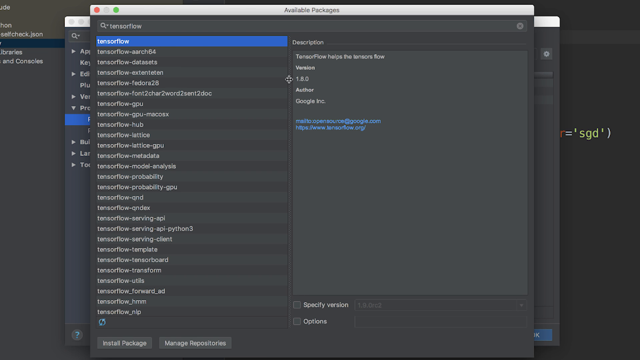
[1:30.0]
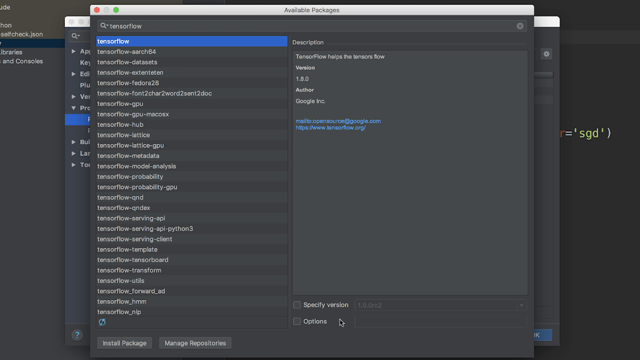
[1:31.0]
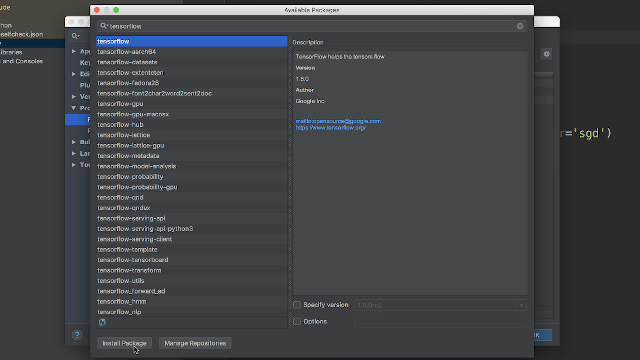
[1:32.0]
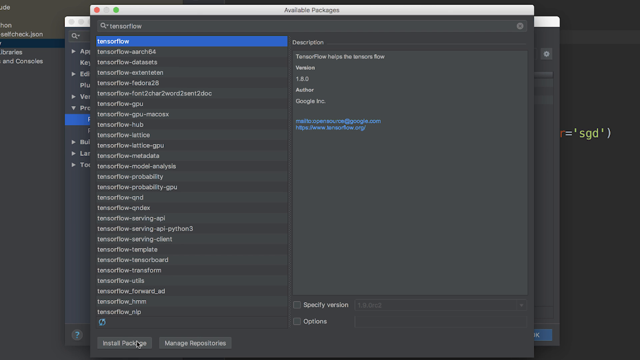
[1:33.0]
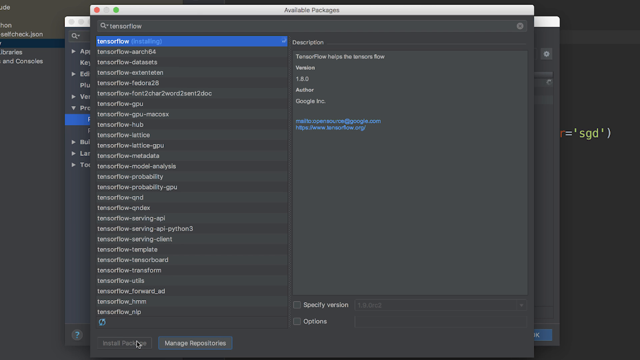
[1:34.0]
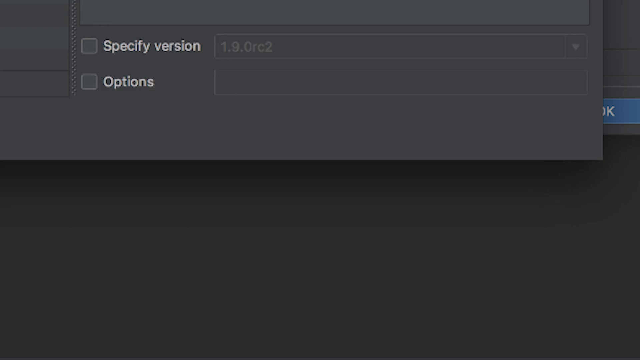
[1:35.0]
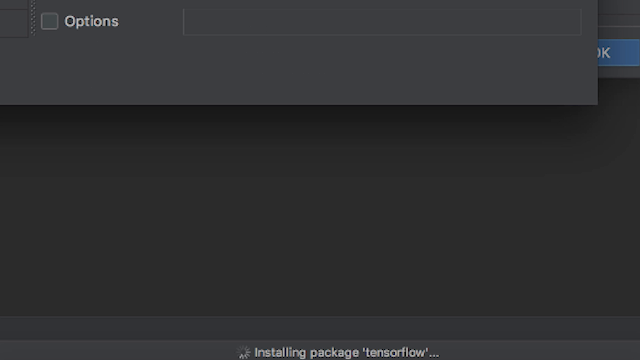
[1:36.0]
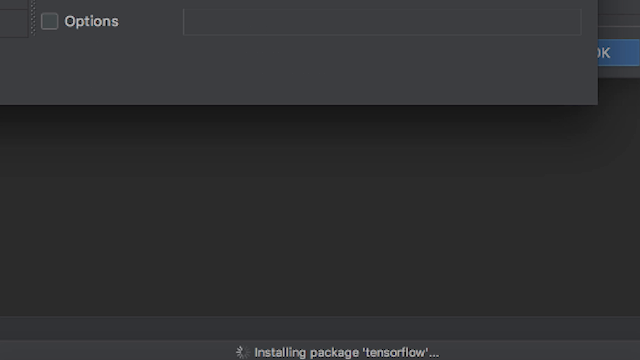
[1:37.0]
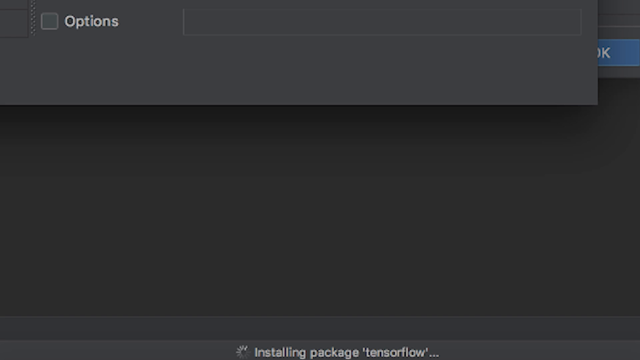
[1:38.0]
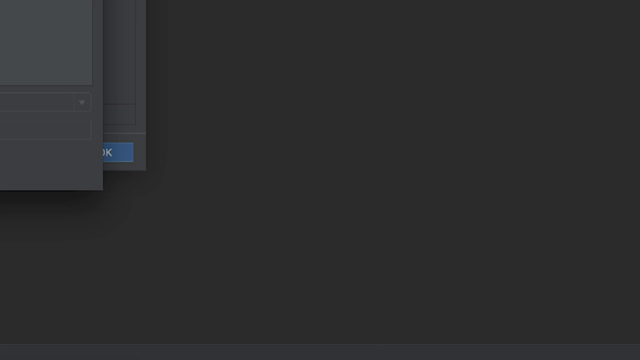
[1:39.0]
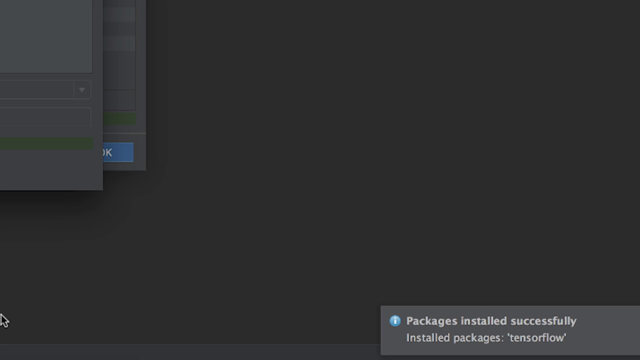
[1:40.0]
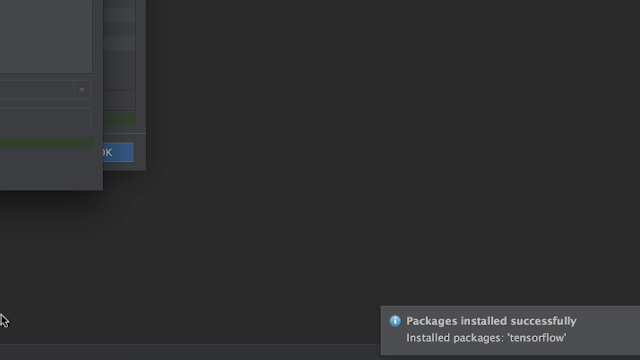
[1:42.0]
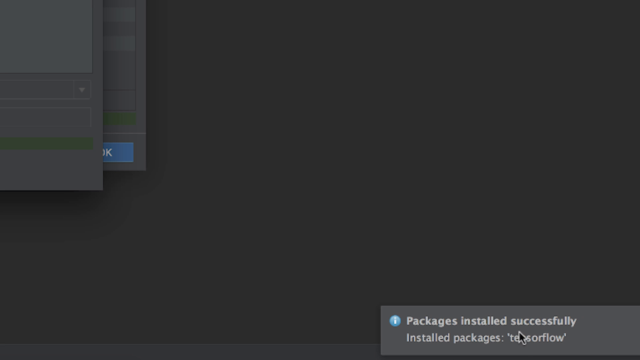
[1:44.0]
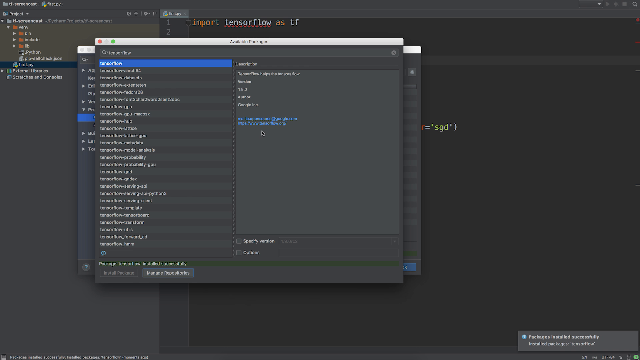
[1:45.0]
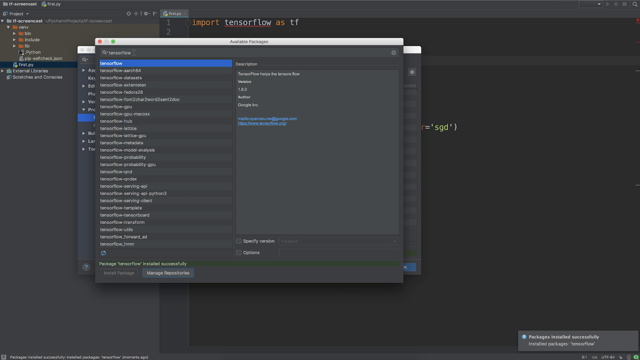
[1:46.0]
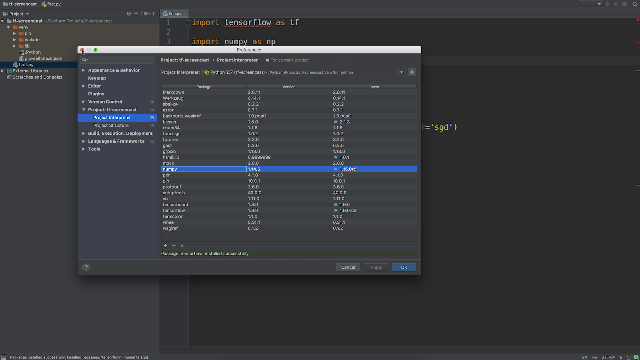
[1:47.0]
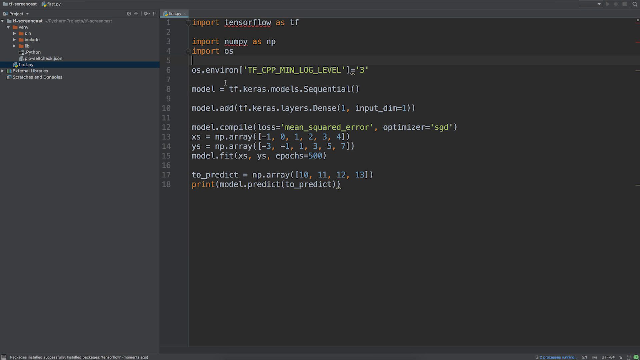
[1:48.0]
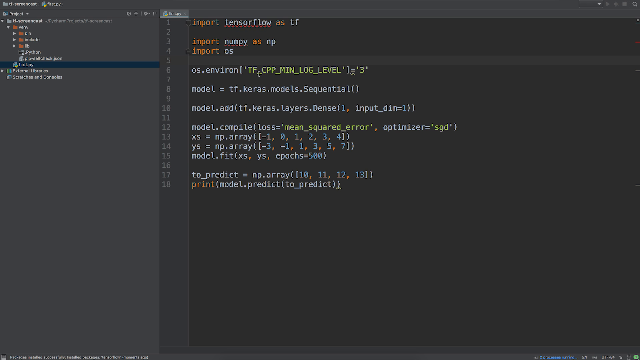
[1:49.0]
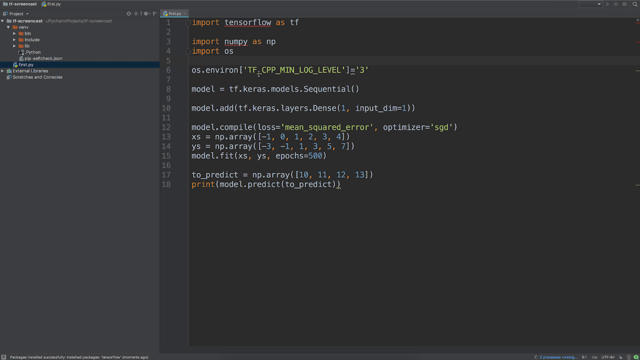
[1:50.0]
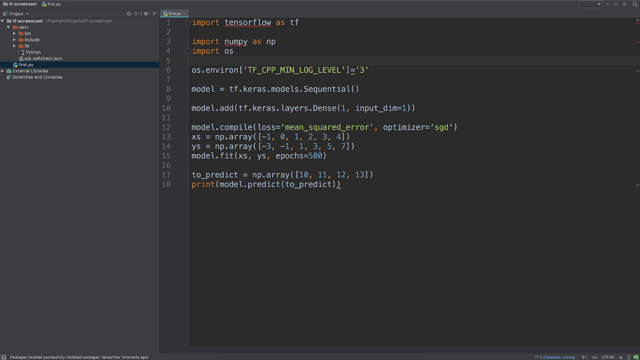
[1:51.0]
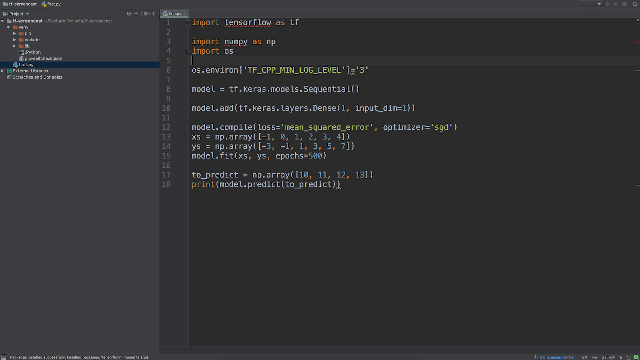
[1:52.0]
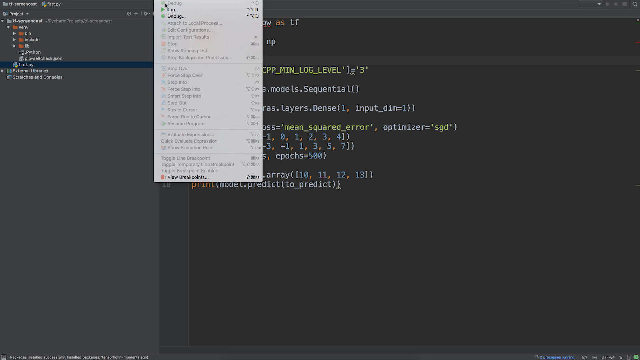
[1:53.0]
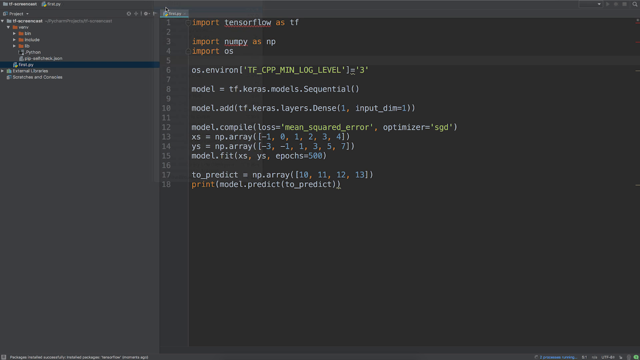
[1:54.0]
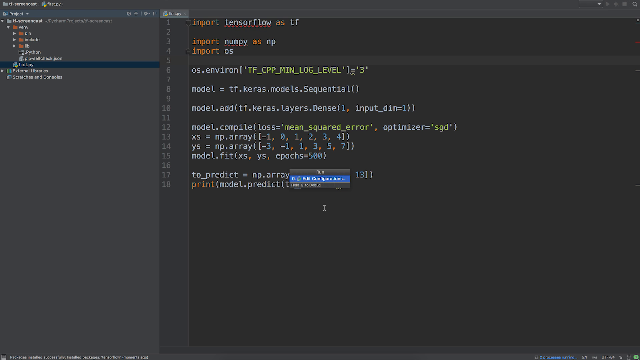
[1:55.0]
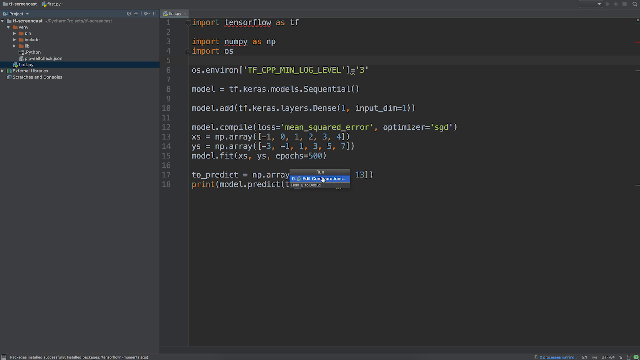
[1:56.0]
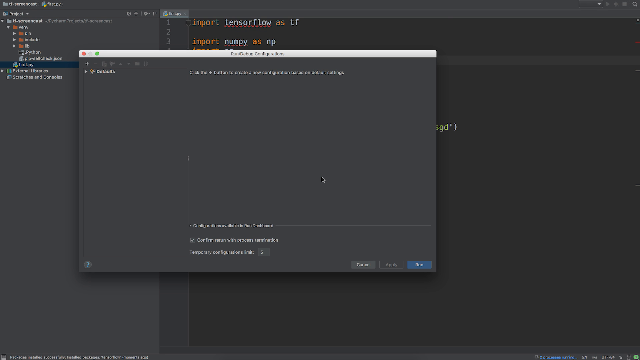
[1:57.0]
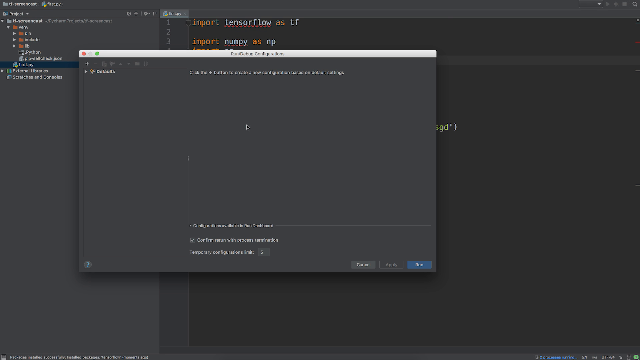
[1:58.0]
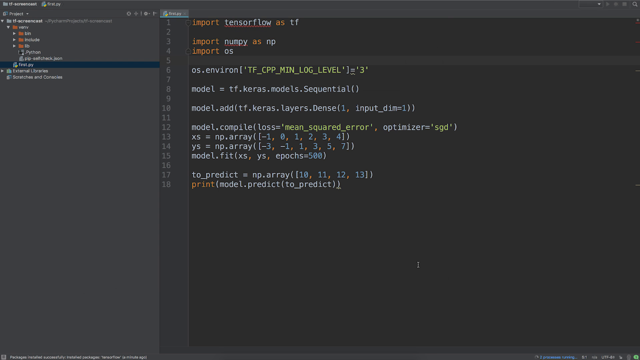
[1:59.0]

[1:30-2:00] Two layers sit on top of the original layer, which was black on the right two-thirds and gray on the left one-third. The top screen is gray on both sides, with a lot of code text on the left and some code on the right. He zooms in to a button that says "options," then zooms away, leaving mainly a gray screen. He returns to the middle portion, which has a lot of new code, with TensorFlow imported as tf at the top; the words "model," "predict," and "model.prediction" are visible. He pulls up a file screen, highlights something in blue, and brings up another screen; all the screens are gray. He returns to the double screen on top of the base screen.